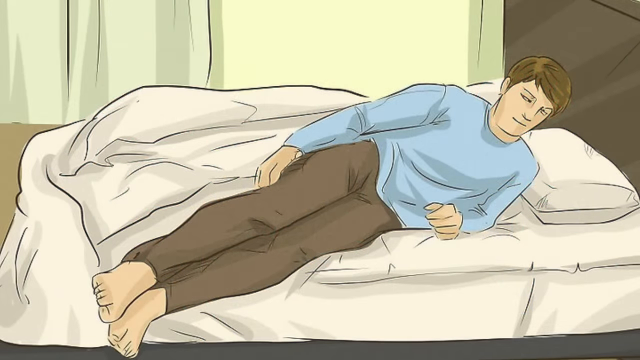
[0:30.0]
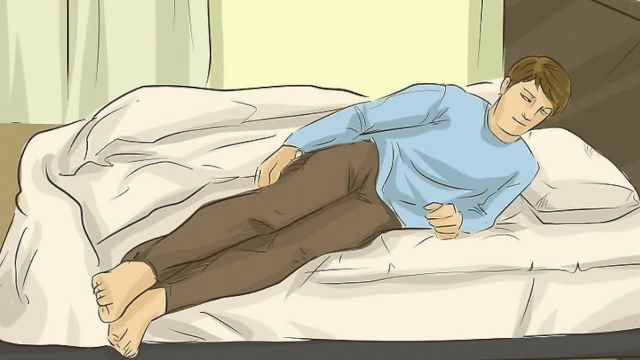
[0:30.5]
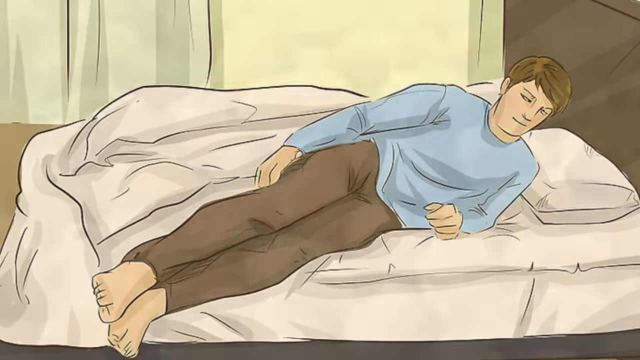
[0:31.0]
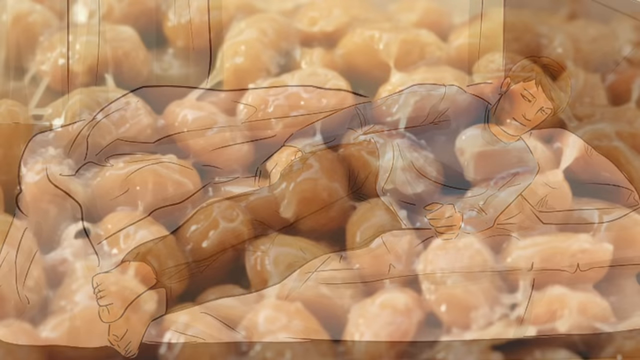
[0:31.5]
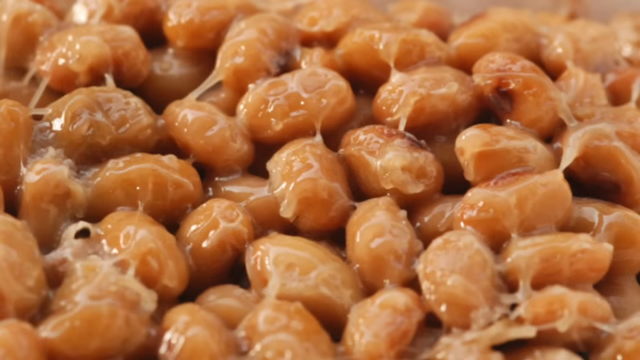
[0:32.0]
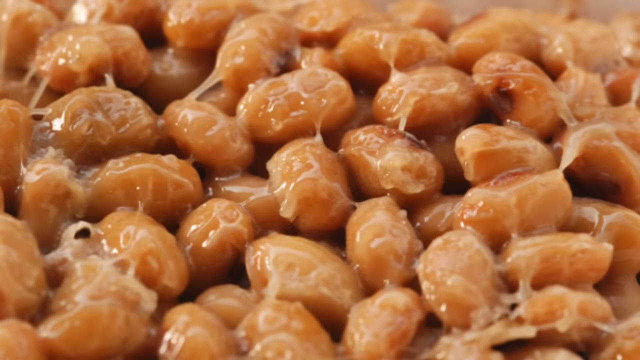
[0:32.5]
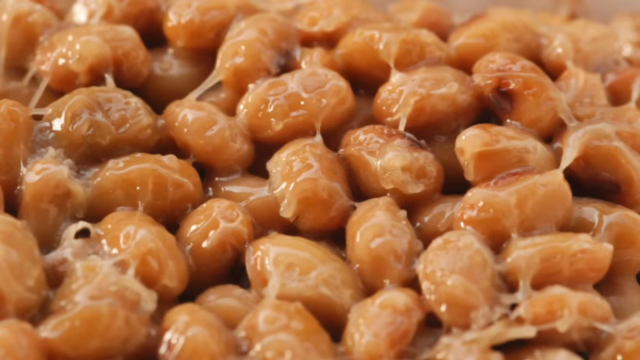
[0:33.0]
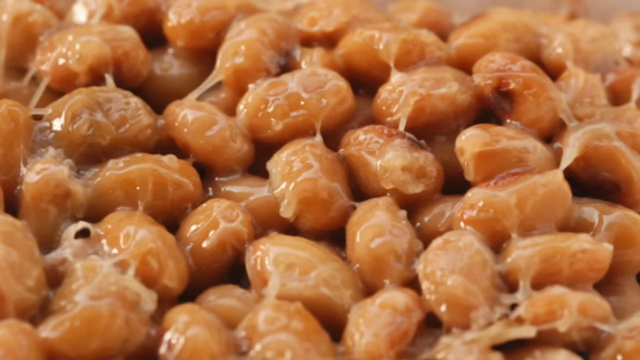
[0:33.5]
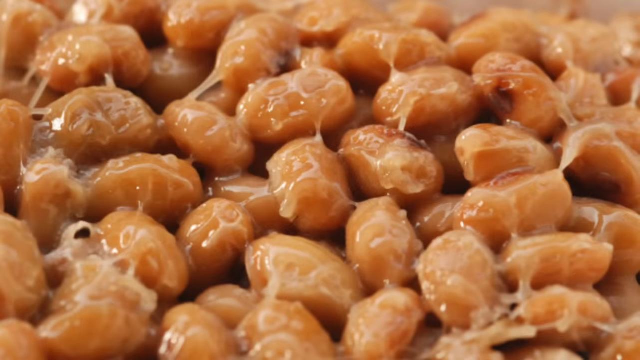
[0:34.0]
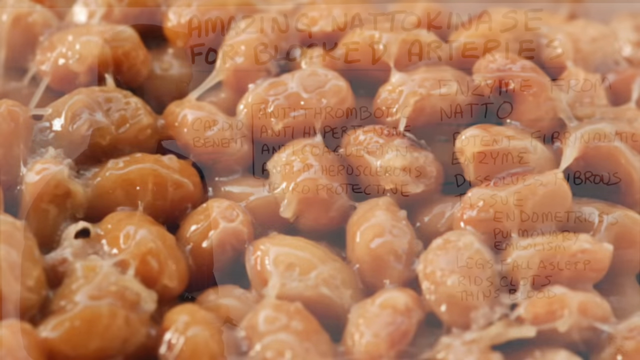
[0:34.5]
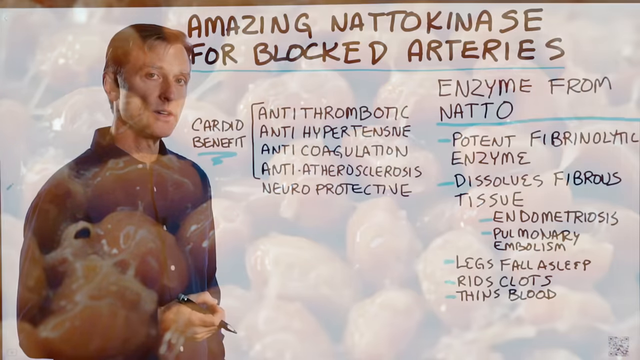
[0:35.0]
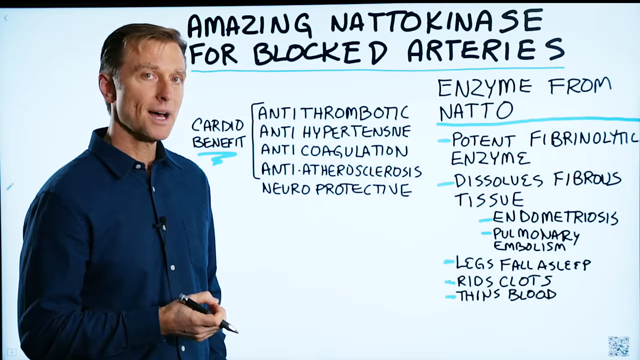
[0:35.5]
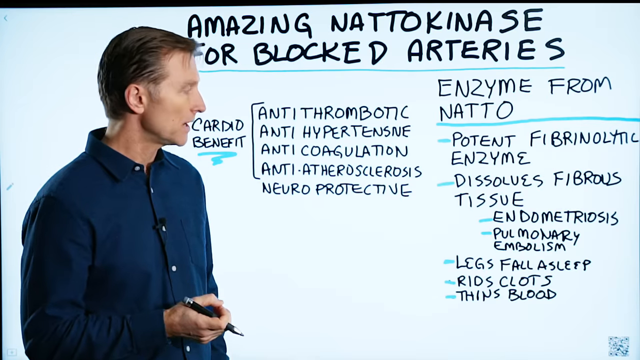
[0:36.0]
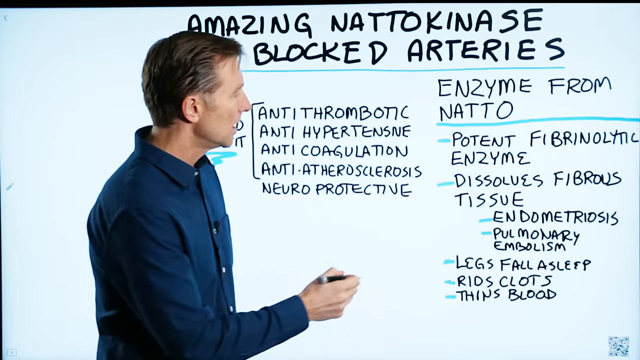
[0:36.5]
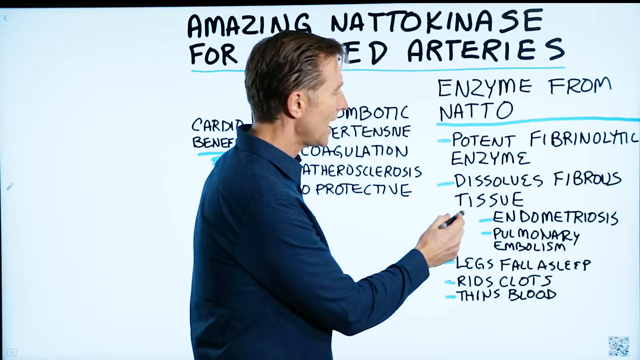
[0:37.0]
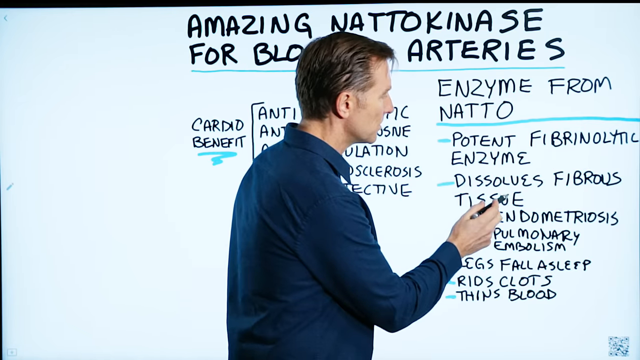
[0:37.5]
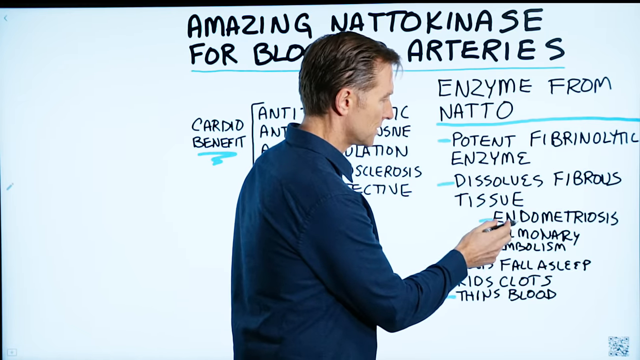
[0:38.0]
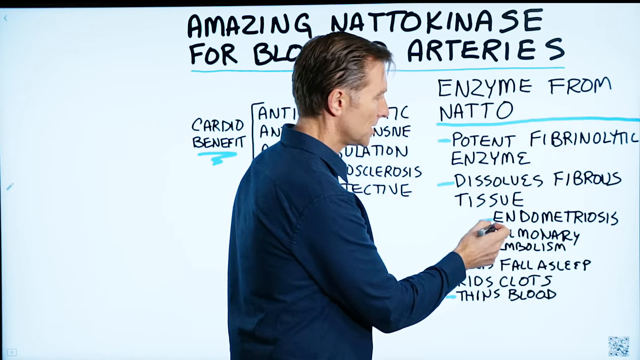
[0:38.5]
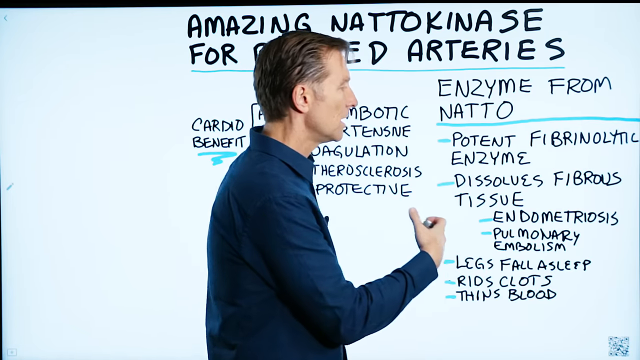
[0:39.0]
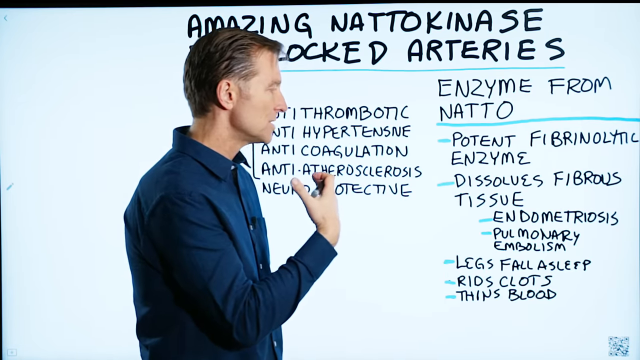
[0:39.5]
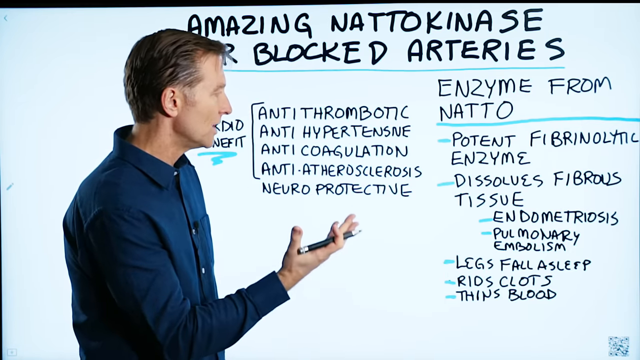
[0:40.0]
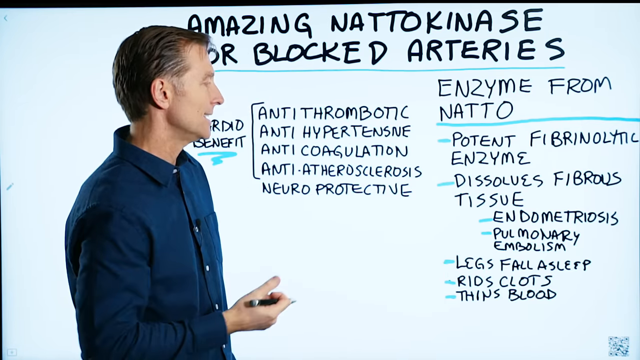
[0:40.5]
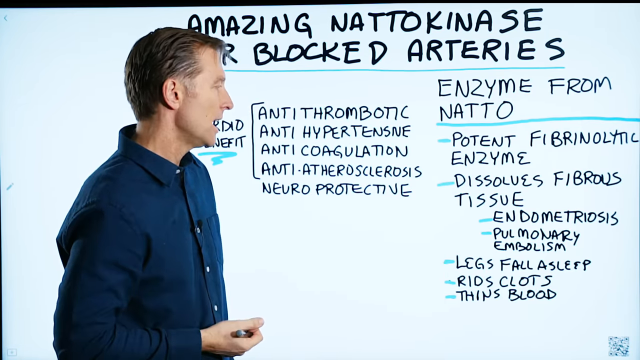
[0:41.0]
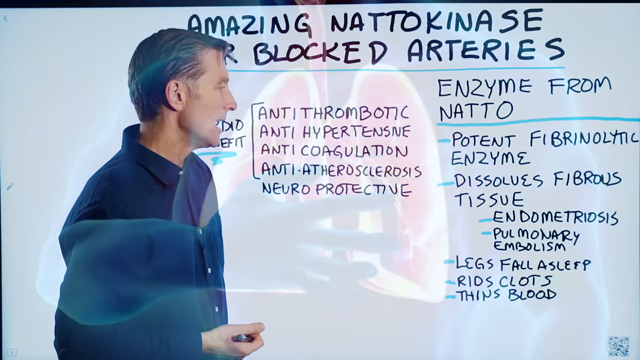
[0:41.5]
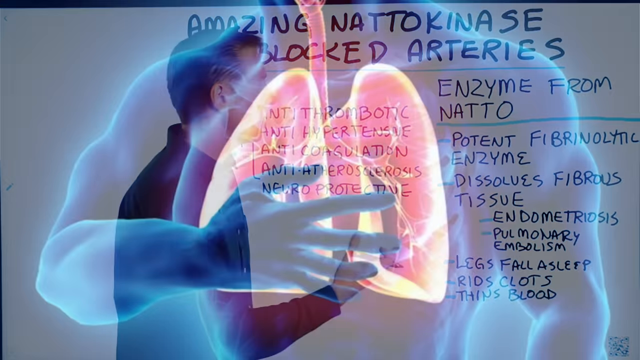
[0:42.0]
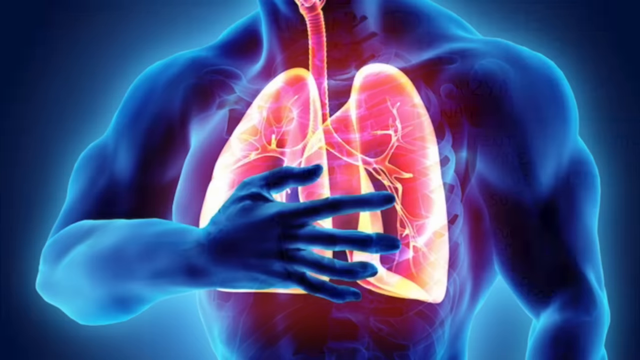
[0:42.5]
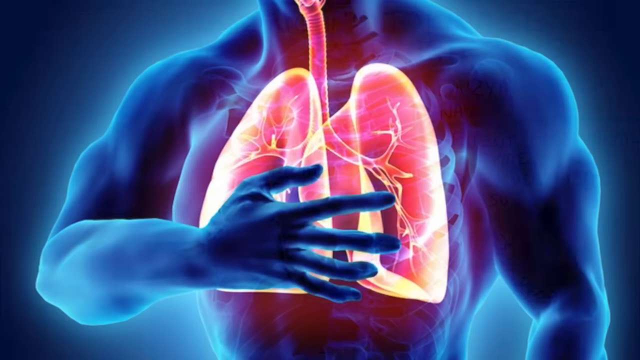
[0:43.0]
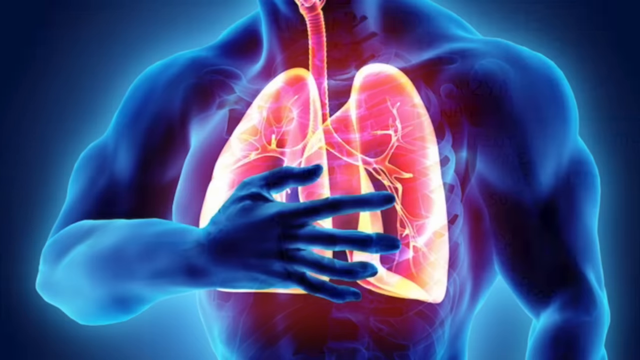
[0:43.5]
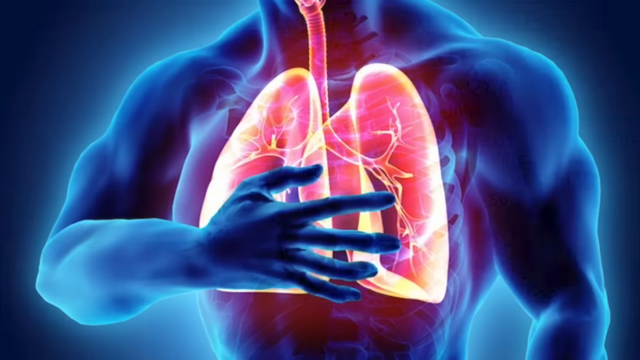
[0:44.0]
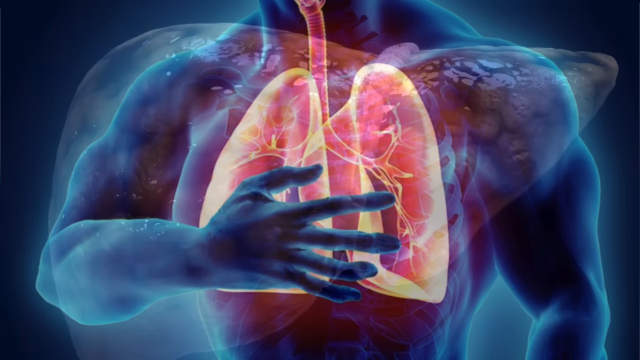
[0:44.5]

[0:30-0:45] The cartoon image of the man lying in bed switches to the sticky-looking beans. The white man in the blue shirt stands in front of the whiteboard, pointing to words and talking. He points to the word "endometriosis" under the word "tissue". A graphic shows a man having a heart attack or something similar: a muscular man holding his chest. Then a nasty-looking liver appears.